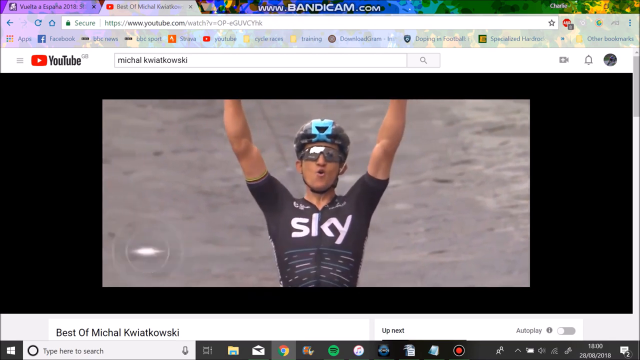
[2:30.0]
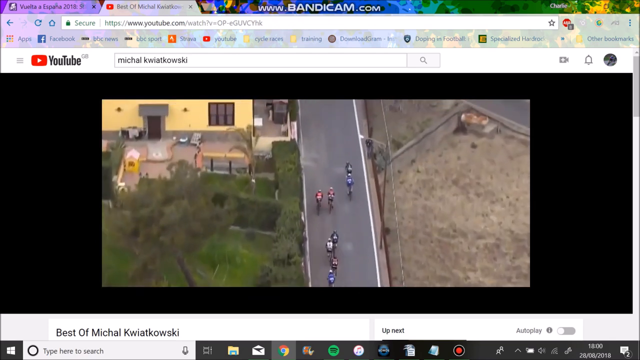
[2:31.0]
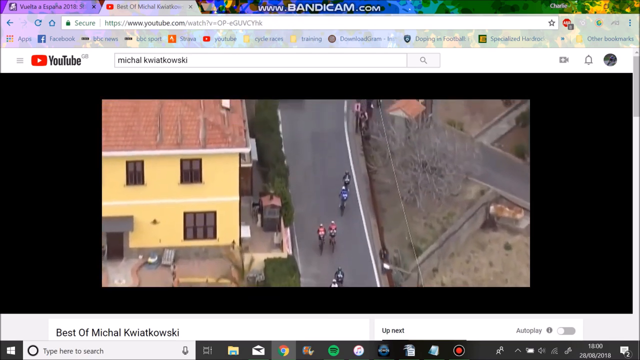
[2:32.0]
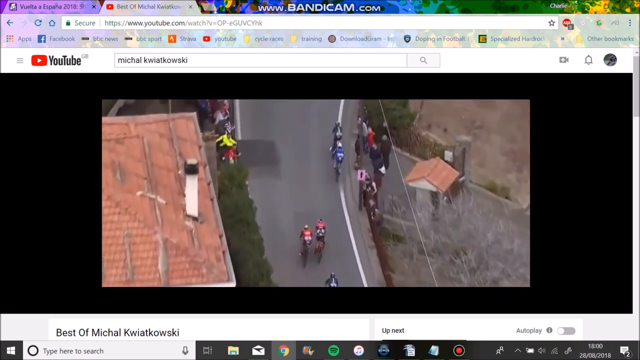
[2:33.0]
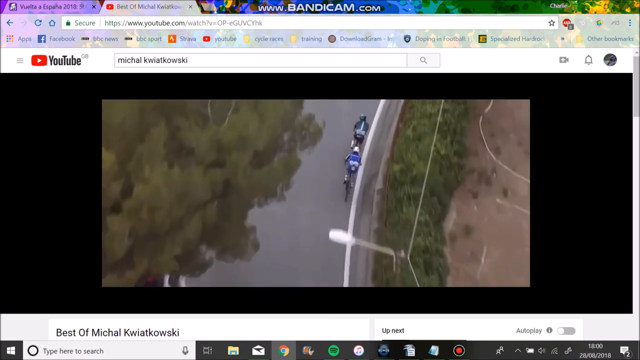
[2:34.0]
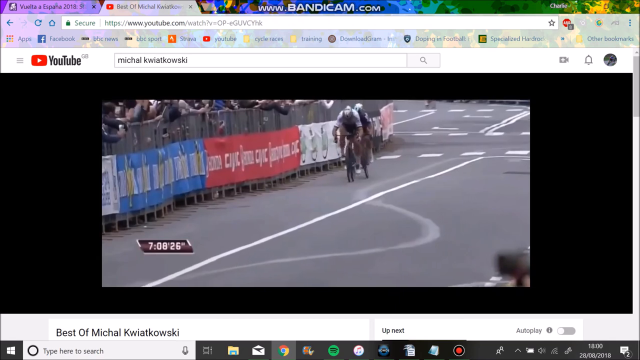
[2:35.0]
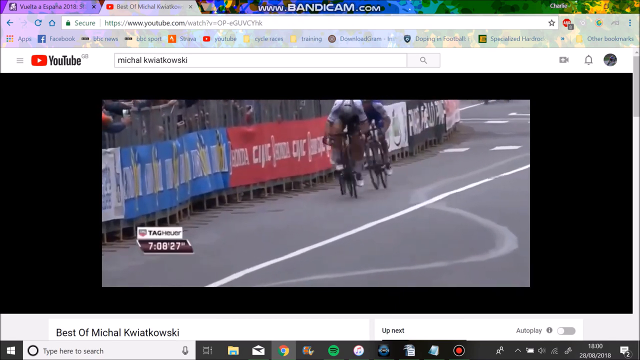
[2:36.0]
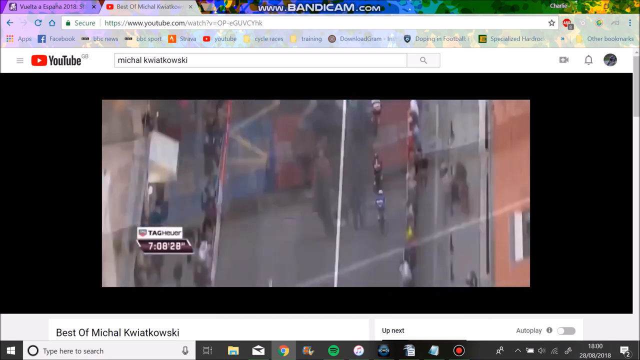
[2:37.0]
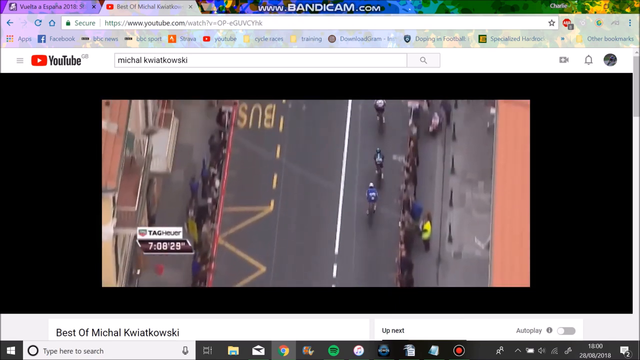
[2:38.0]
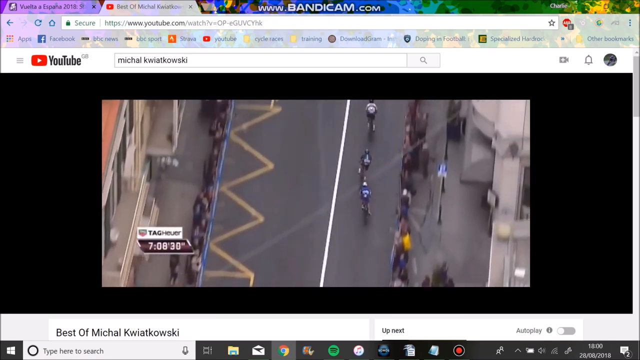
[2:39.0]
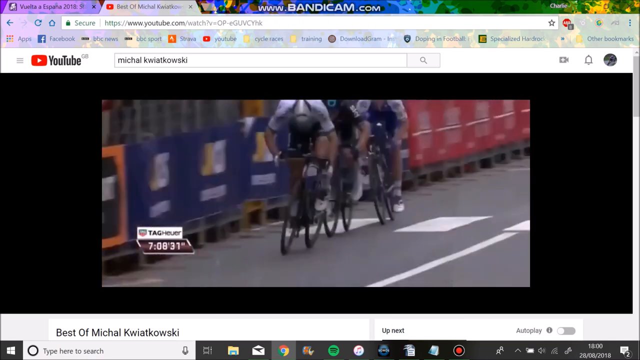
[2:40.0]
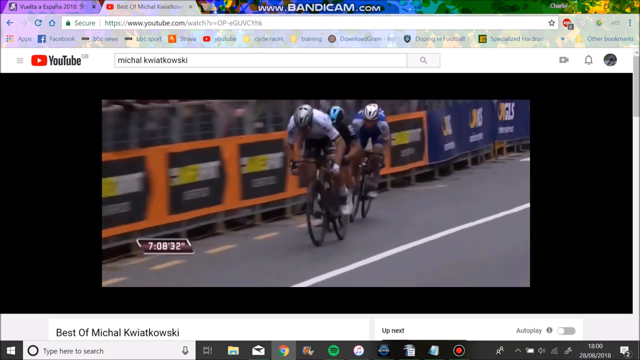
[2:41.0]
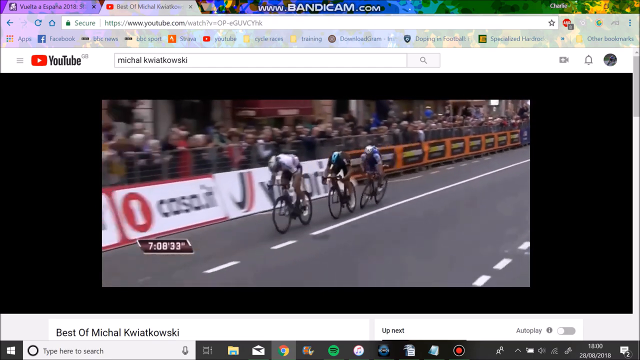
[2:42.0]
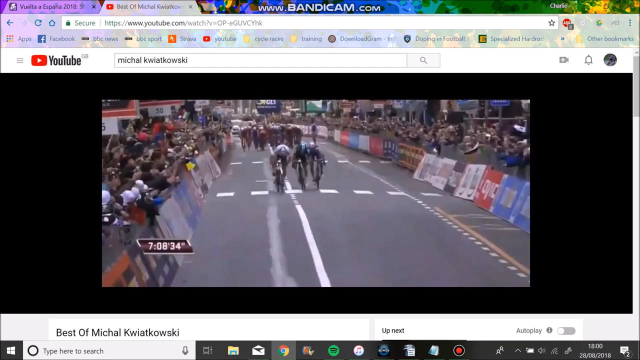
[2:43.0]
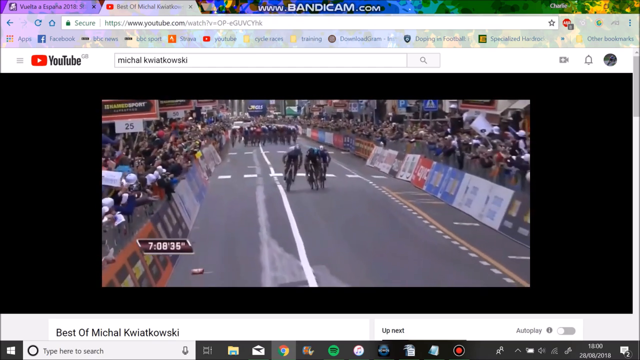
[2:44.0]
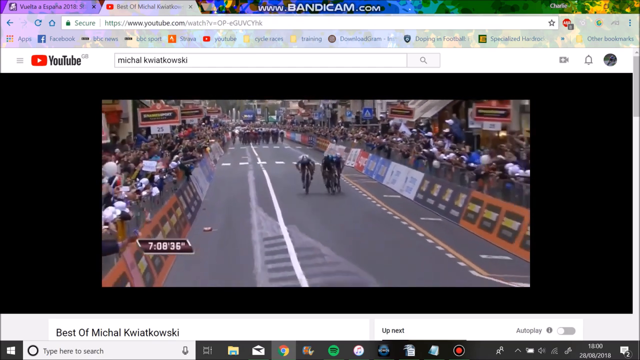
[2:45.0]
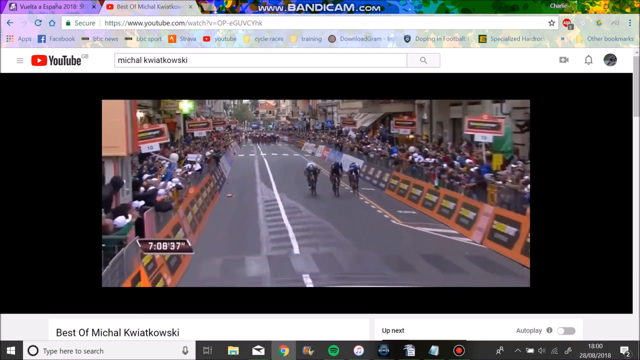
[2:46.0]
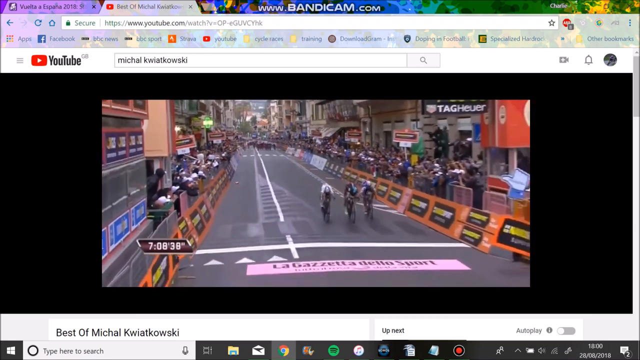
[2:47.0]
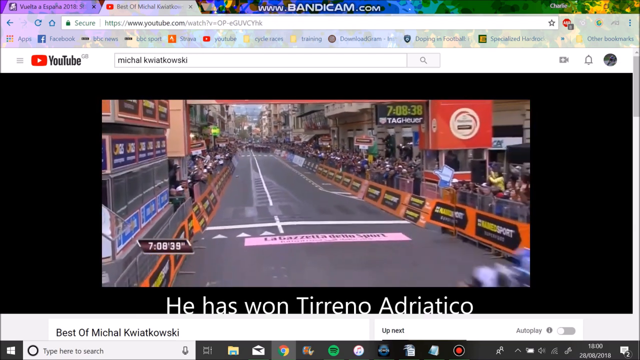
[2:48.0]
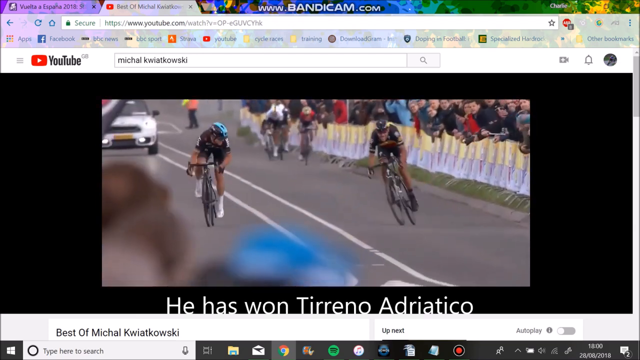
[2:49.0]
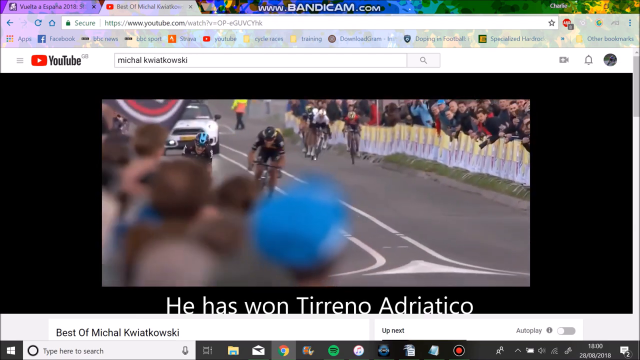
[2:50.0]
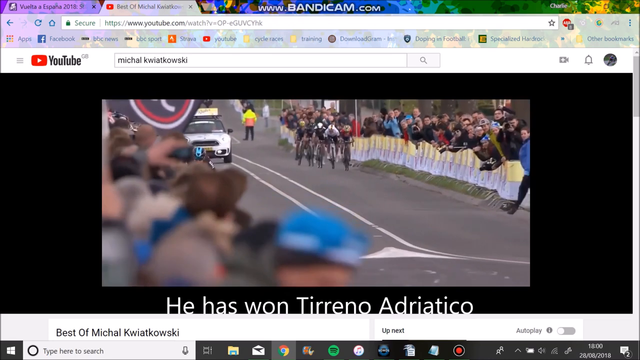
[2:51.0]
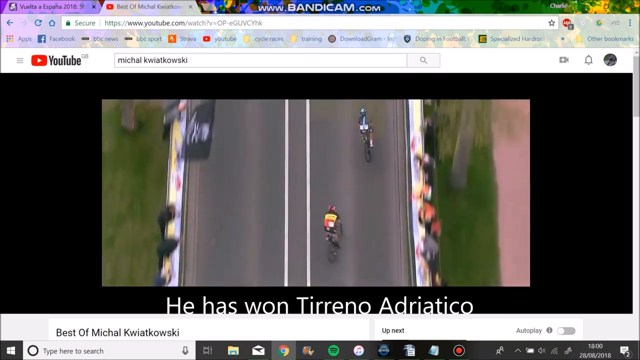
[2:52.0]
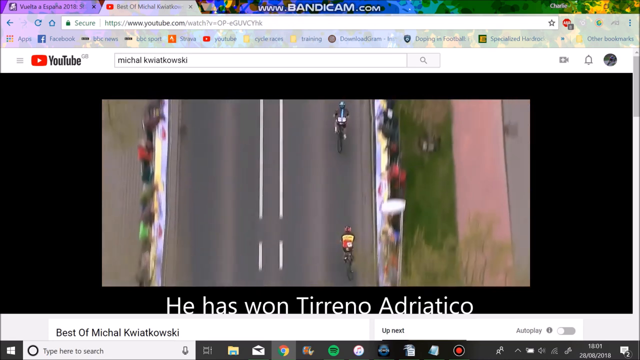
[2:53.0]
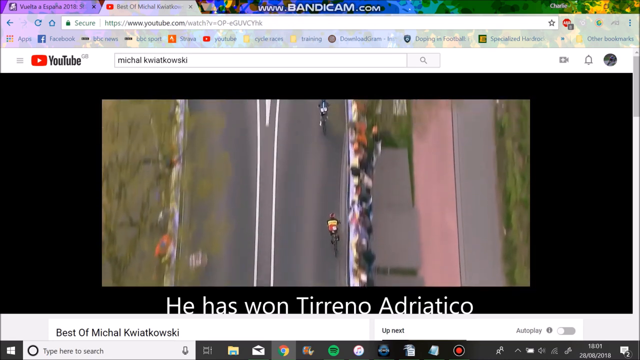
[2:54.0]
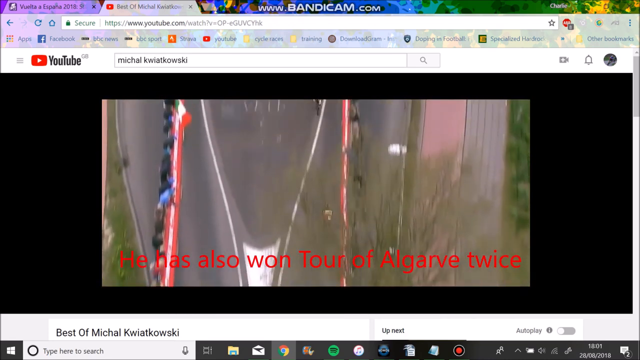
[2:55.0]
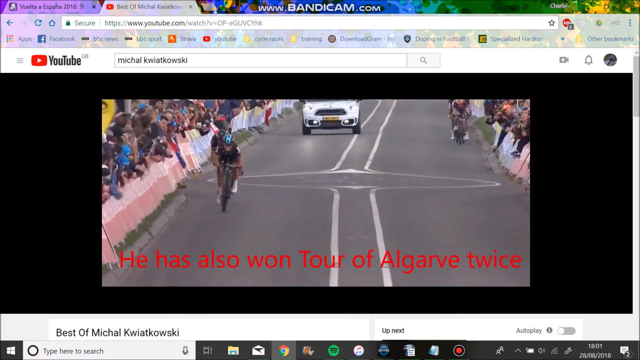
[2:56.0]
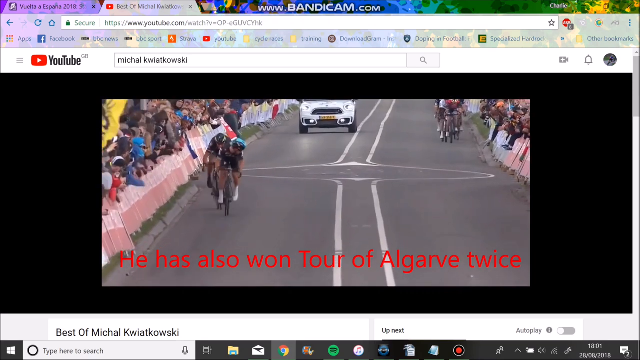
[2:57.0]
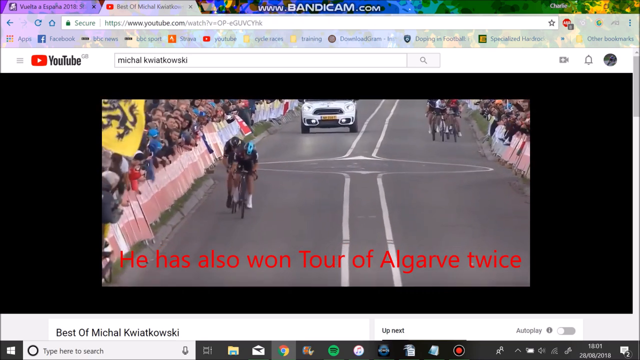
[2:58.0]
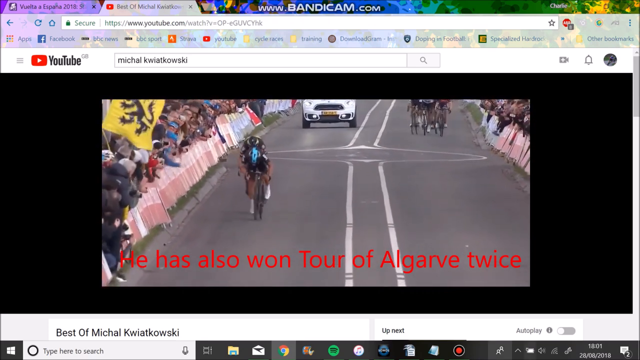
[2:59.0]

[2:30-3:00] Another angle of Michael Kwiatkowski cycling appears to be a drone shot zooming in on him from the top down as he competes against one other rider. It cuts to another drone shot of three riders, one in the lead and two right on his tail, all pedaling with all their might while massive crowds line the left and right sides of the track. They cross the finish line right next to each other in a very close finish, and text at the bottom states that he has won Tirano Adriatico. It then cuts to another race where he is far in the lead with one rider behind him and a large group to his bottom right; it is also stated that he has won four of algarve twice. A car drives on the road next to the large group behind the two leading riders.